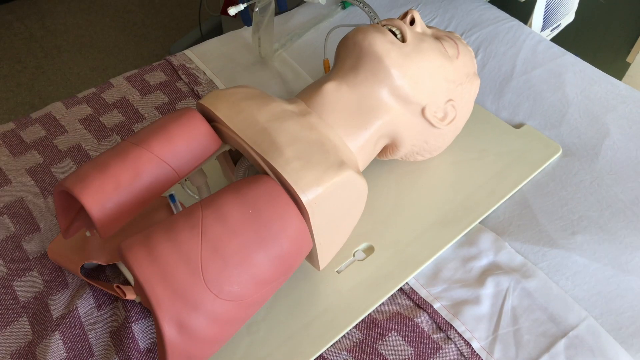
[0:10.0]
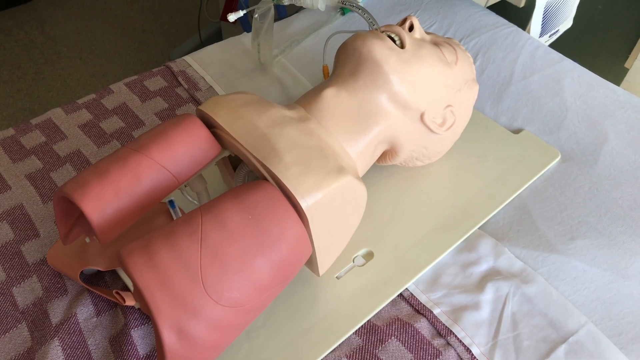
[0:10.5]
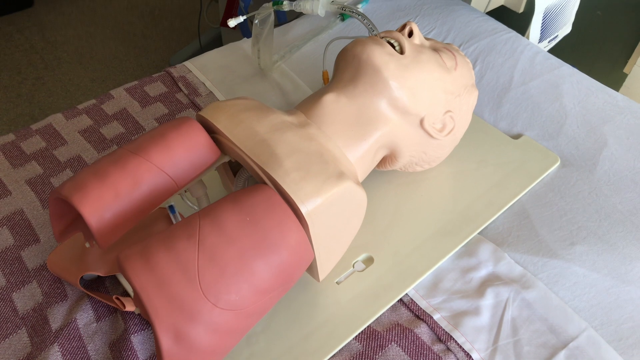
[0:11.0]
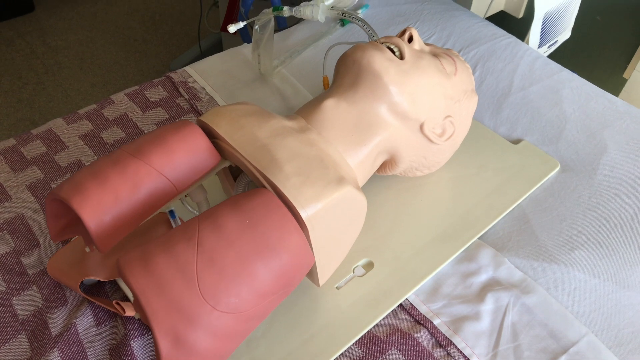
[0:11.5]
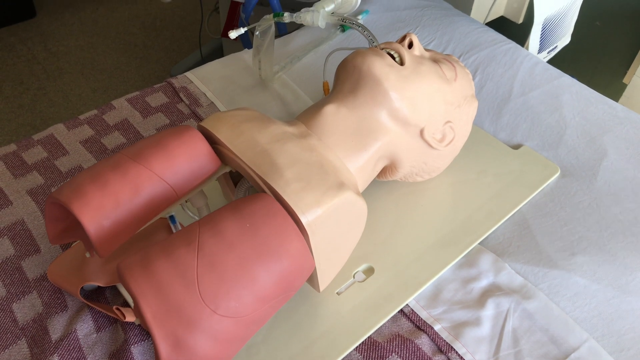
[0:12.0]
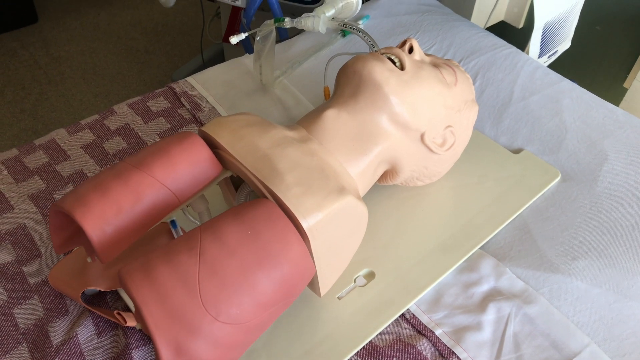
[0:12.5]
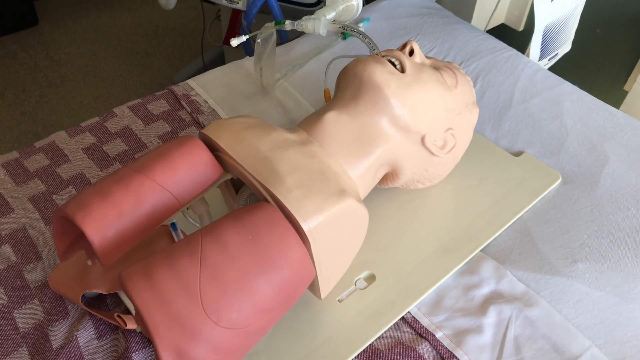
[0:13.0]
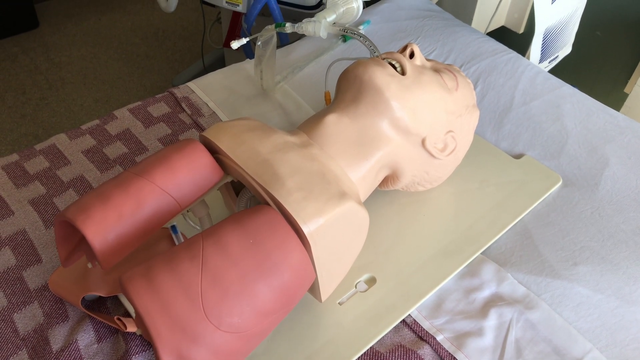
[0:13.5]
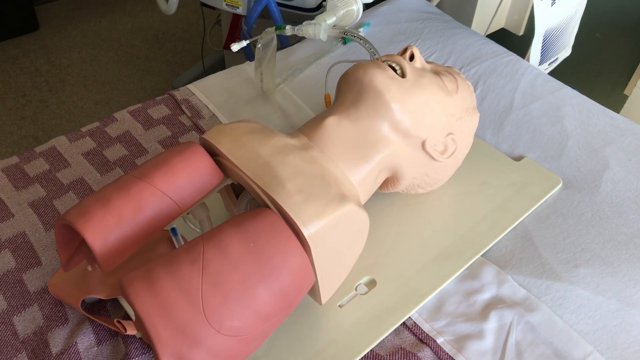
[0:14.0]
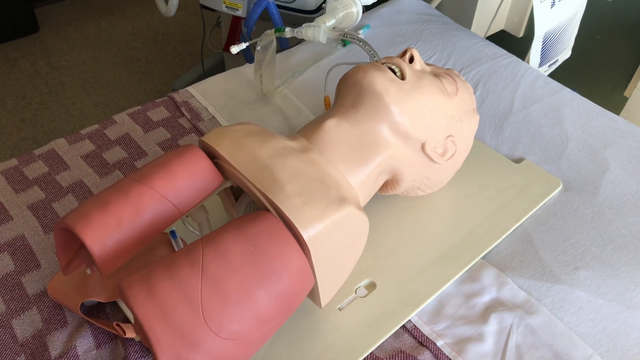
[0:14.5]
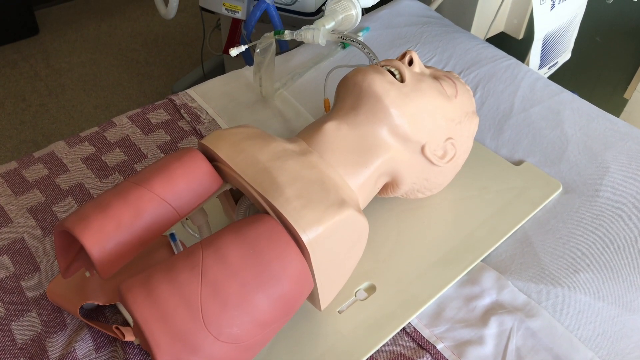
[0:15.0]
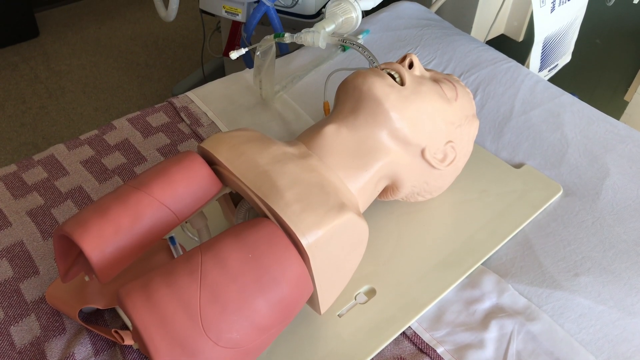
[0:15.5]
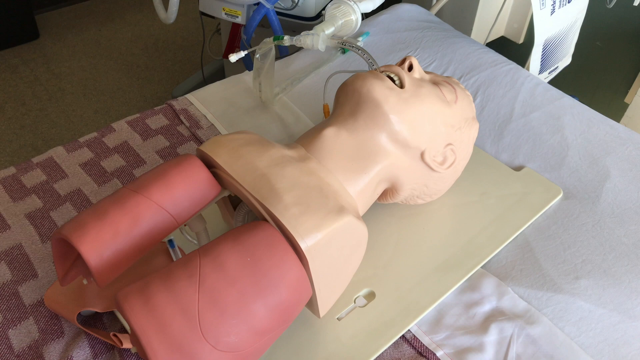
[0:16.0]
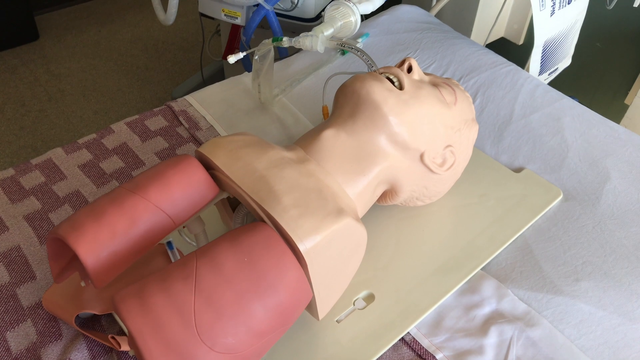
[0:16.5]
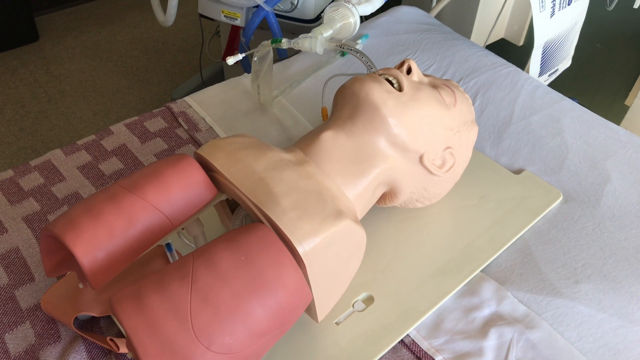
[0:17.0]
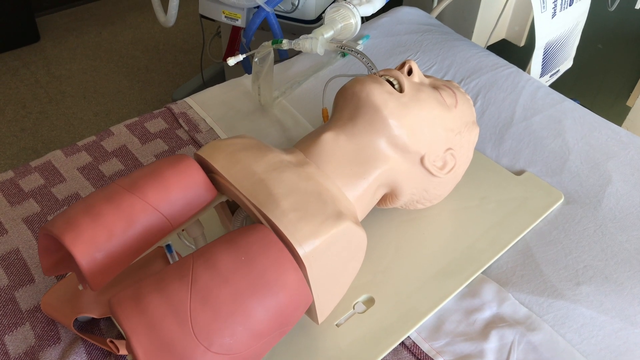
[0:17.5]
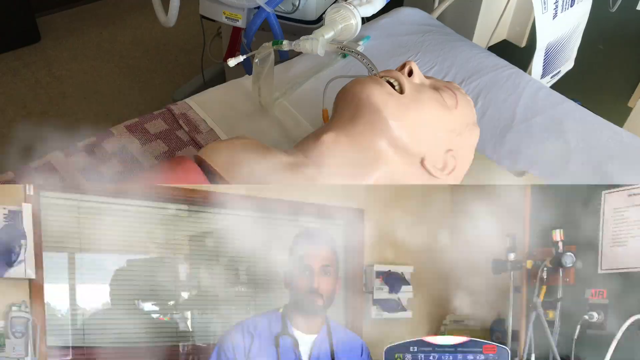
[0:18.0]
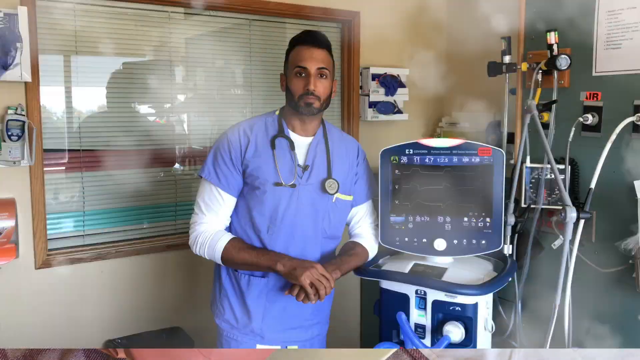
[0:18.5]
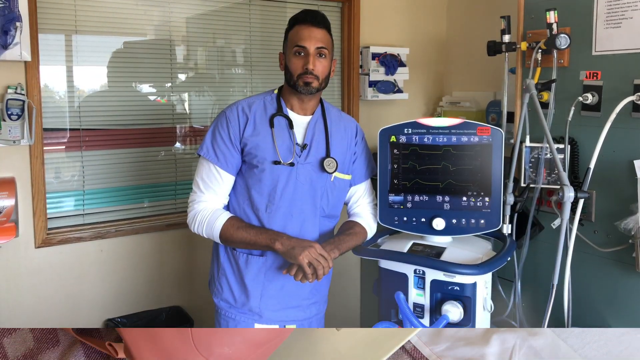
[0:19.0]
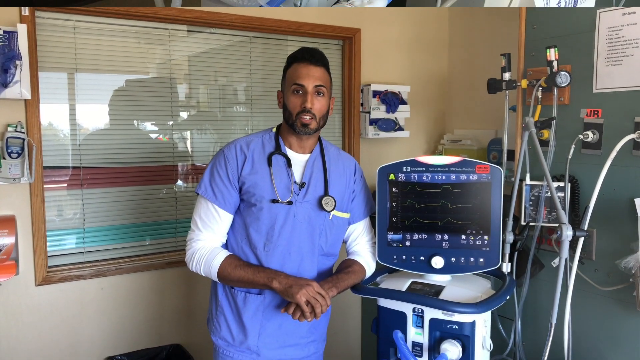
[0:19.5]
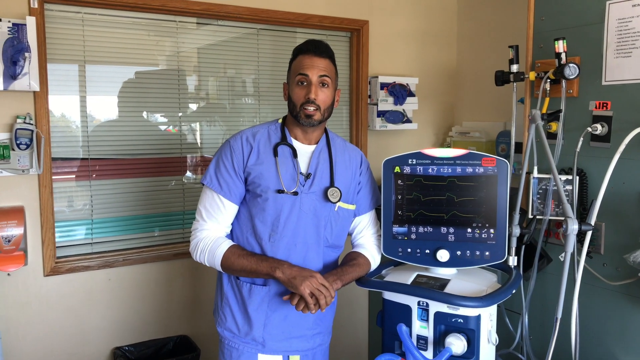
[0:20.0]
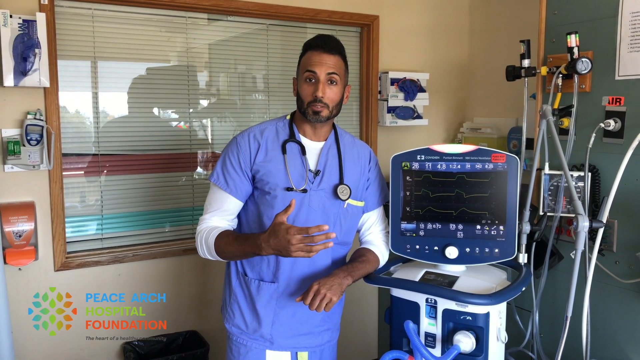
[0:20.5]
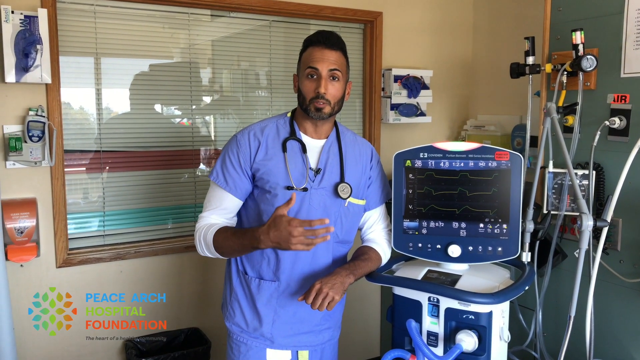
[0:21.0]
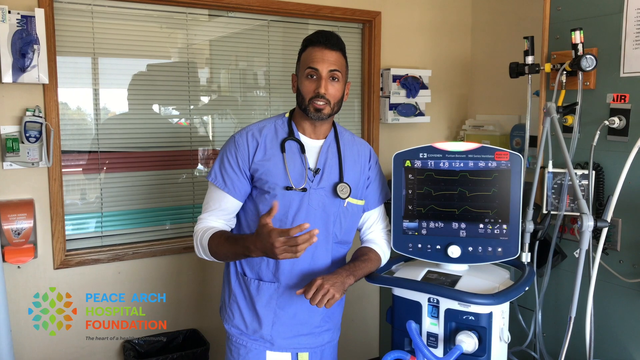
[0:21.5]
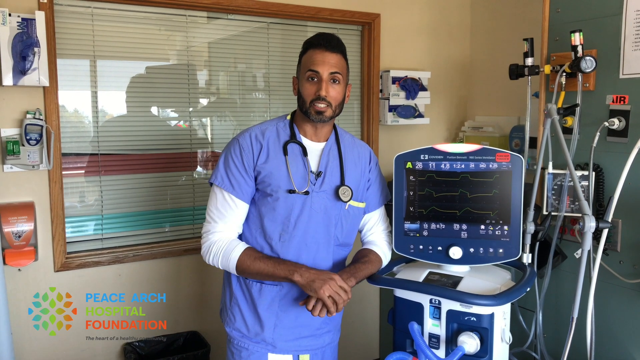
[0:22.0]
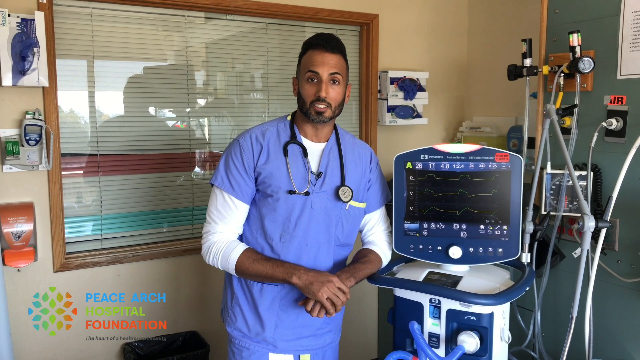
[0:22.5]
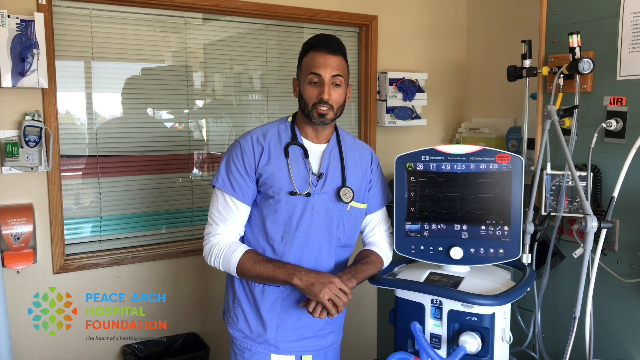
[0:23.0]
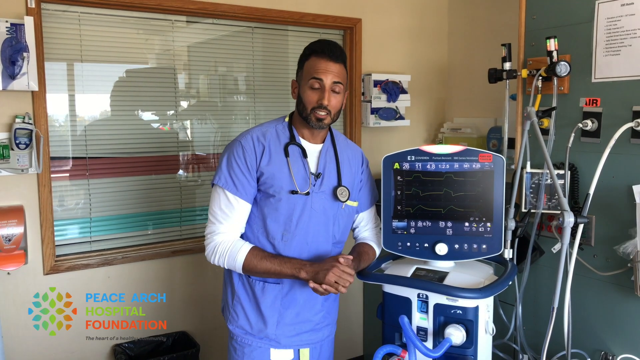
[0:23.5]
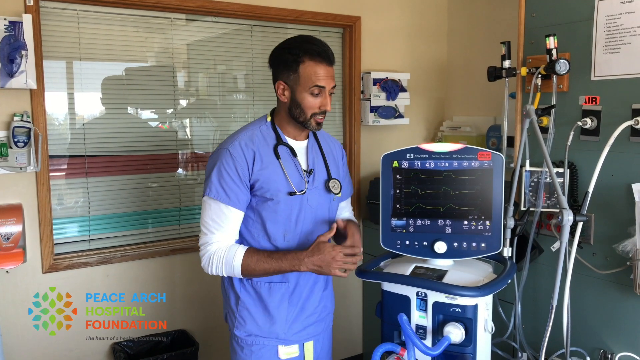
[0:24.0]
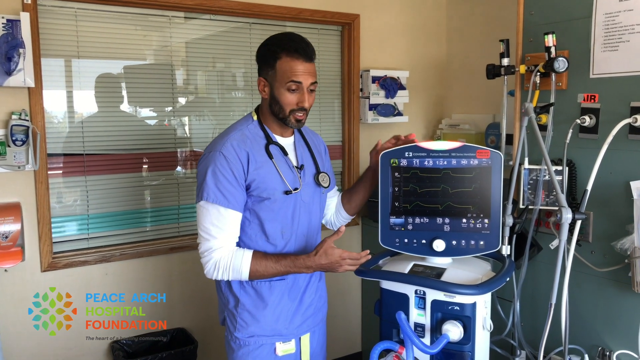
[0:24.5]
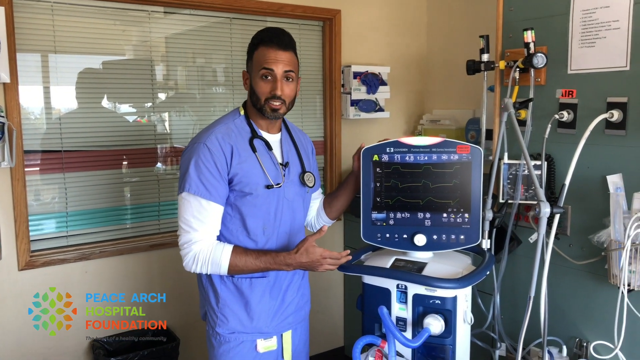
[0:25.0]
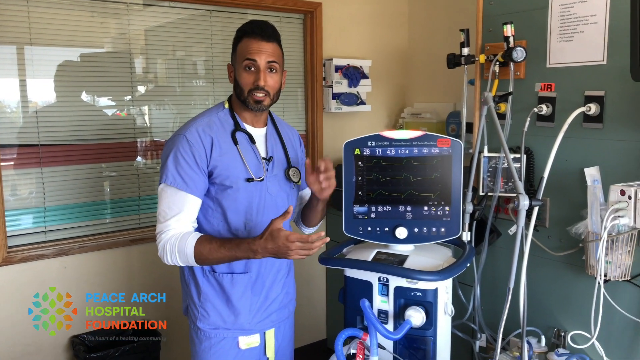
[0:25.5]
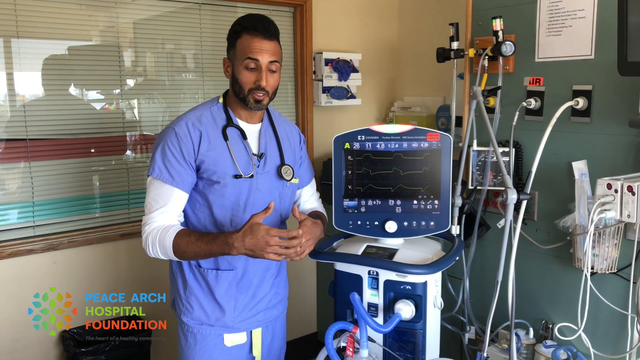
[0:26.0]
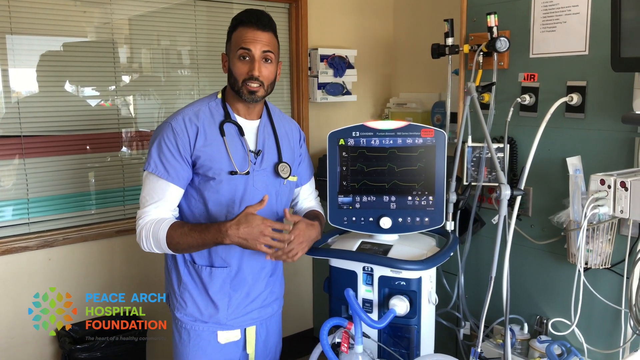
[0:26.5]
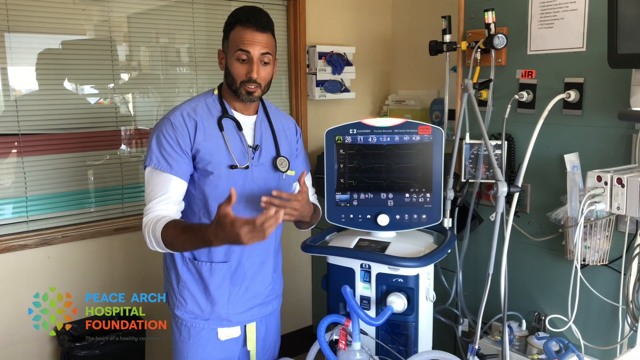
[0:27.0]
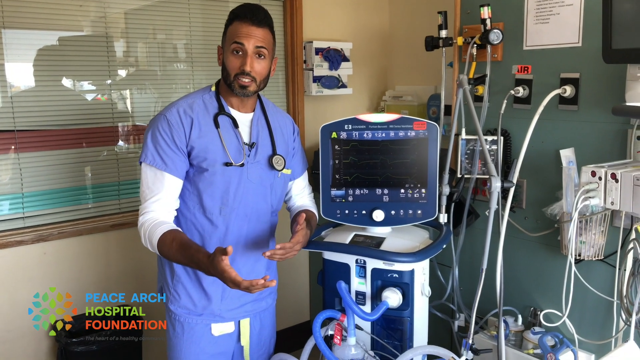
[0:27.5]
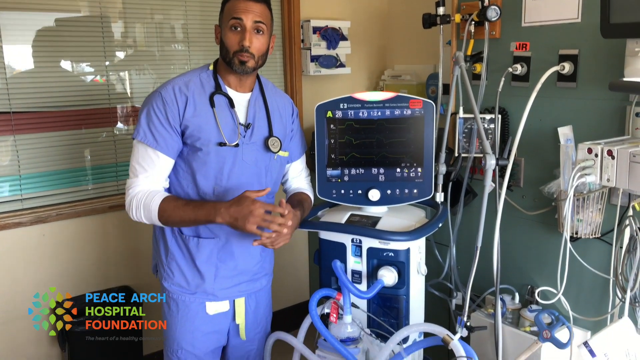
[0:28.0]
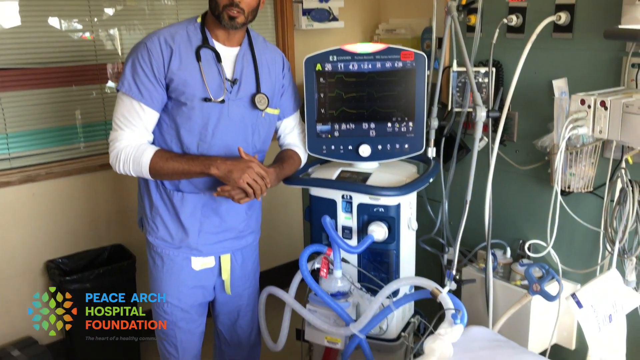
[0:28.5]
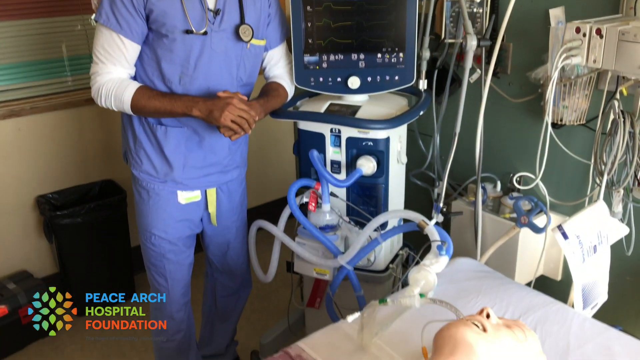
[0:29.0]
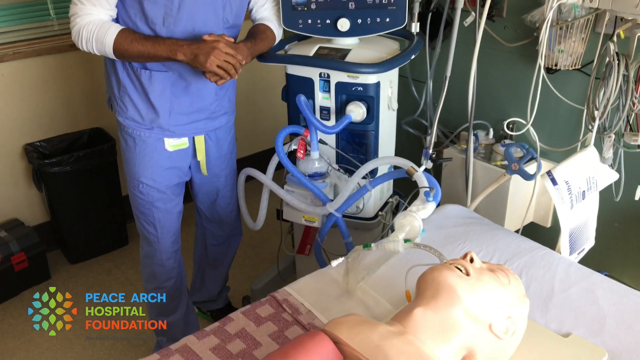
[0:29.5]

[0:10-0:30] The CPR dummy is seen from above and slightly to its left, and it has been intubated. The camera pans slowly up to show the machinery the dummy is hooked up to. The image then changes to a young South Asian doctor with brown skin, dark hair, a short clipped beard and a mustache. He wears blue scrubs over a long white-sleeved crew neck shirt and has a stethoscope around his neck. He is standing next to a monitor on his left-hand side, which shows white squiggles across its screen. Behind him is a window with a closed blind on the other side of it. The doctor talks to the camera, gesturing with his right hand, then turns to the machinery beside him, touches it briefly as if explaining something, and looks down at the intubated dummy below him that is hooked up to the machine.